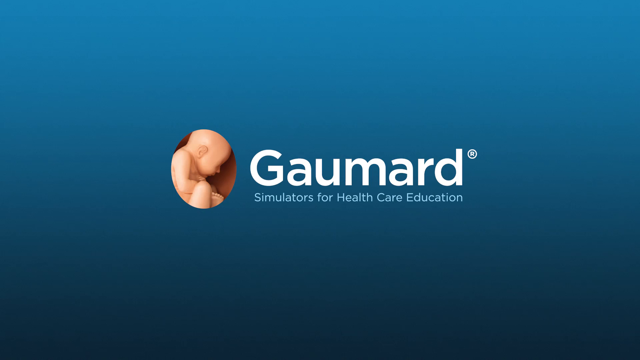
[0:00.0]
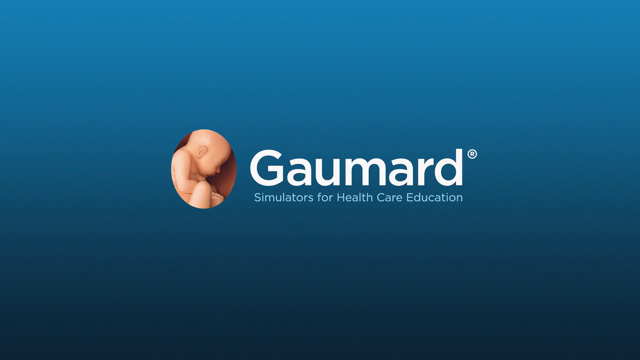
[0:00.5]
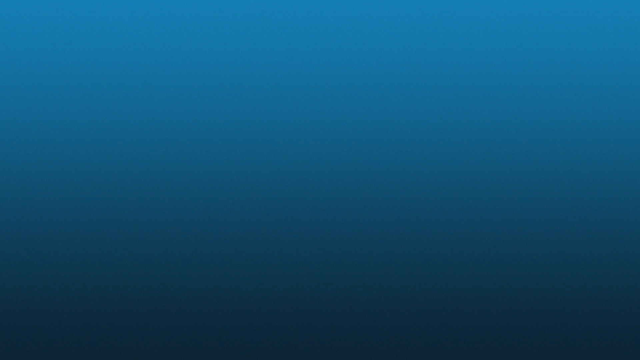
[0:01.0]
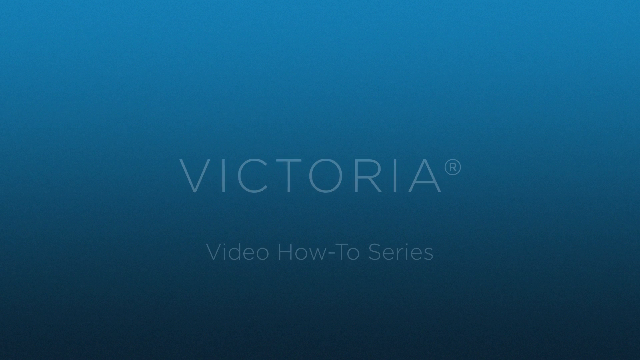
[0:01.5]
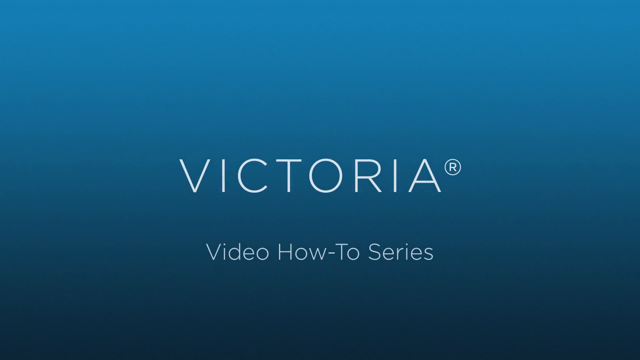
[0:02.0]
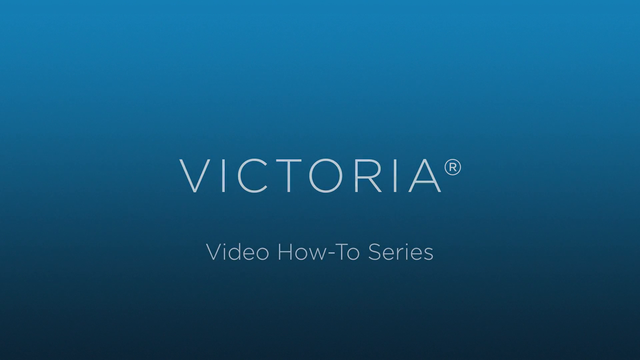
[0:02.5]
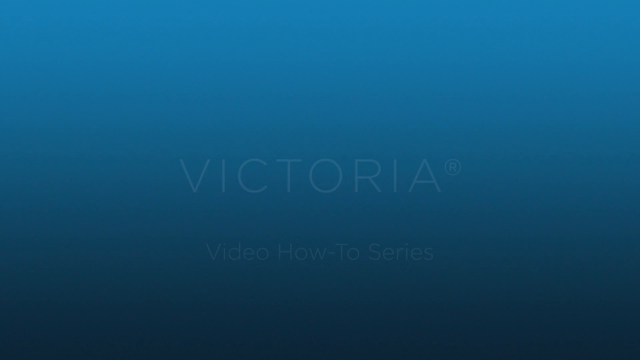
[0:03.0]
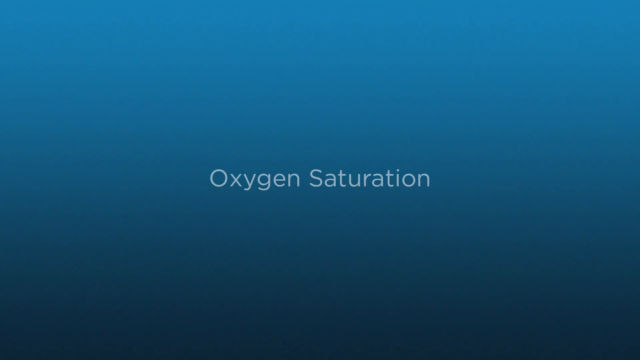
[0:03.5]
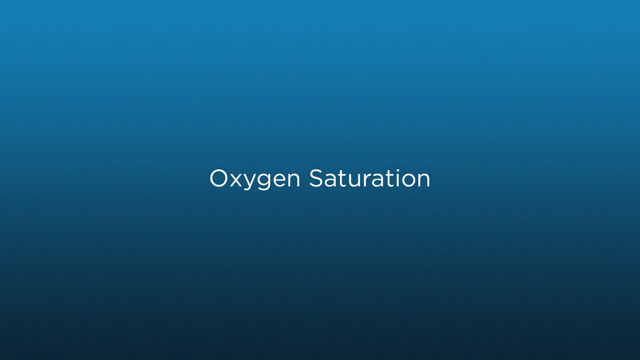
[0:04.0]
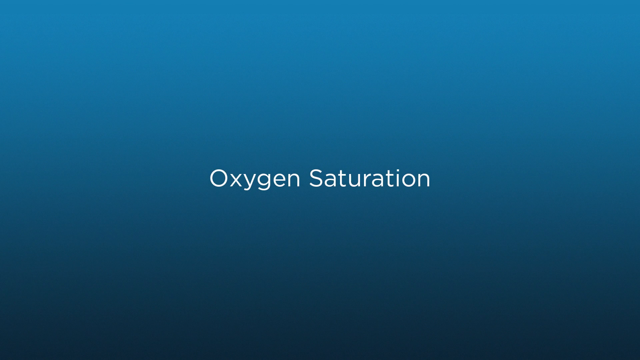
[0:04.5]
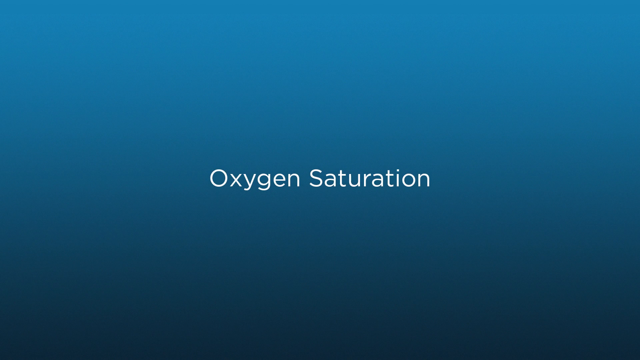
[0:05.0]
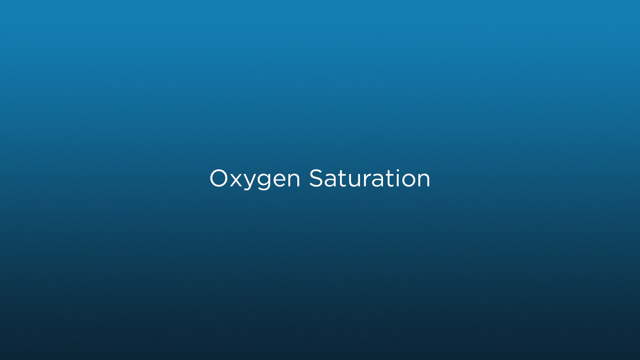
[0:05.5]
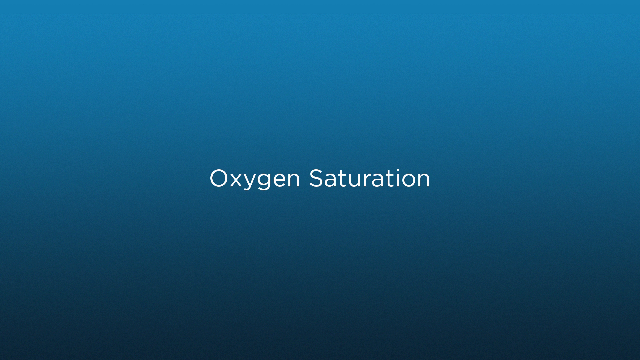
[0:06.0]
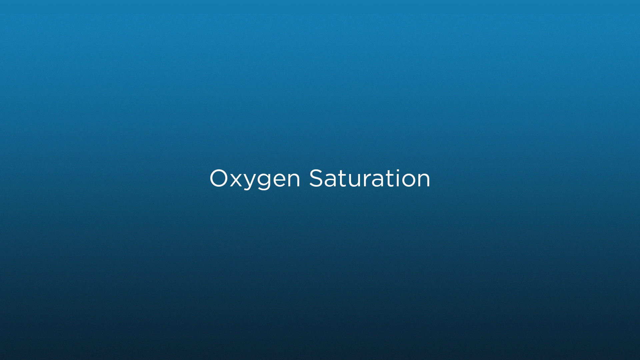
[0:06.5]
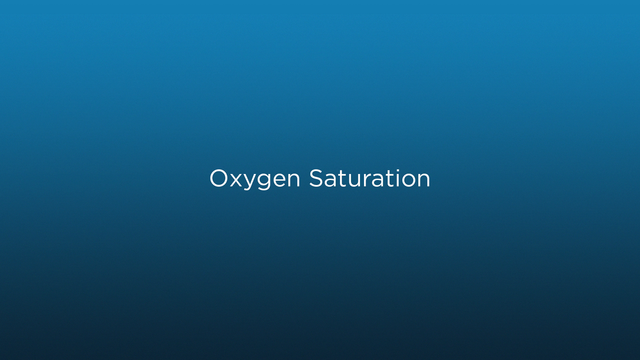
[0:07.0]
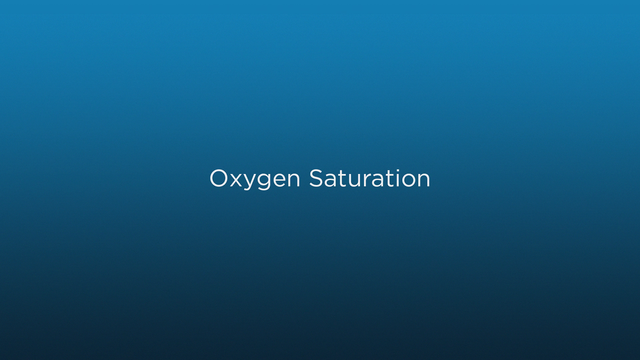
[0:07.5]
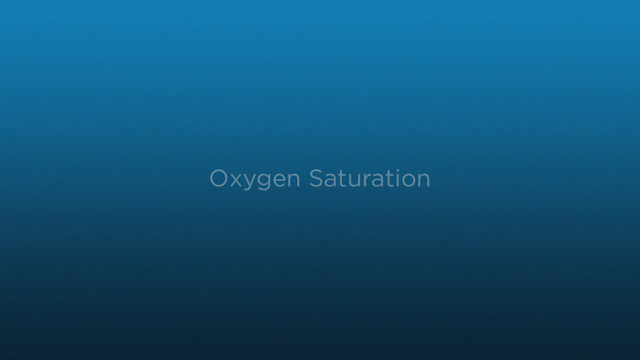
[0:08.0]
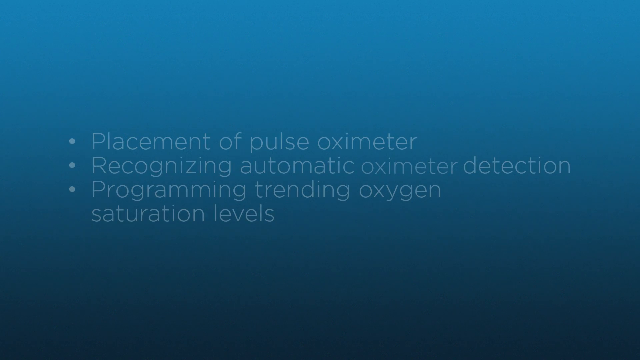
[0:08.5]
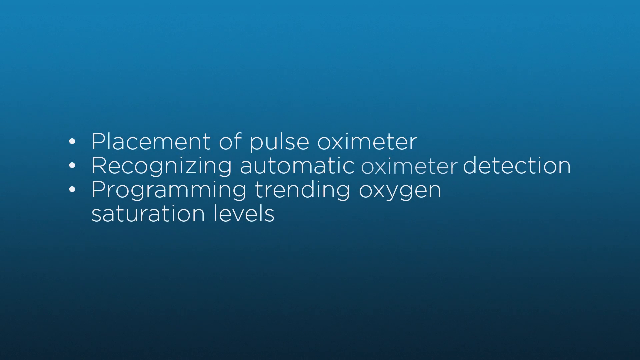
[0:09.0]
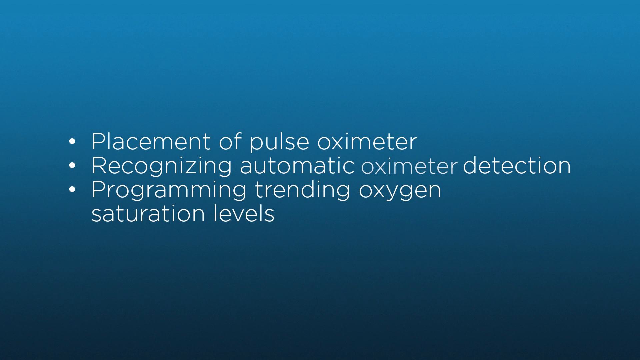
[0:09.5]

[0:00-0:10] The subject is the GumGuard Victoria oxygen saturation and the placement of a pulse oximeter, including recognizing automatic oximeter detection and programming trending oxygen saturation levels.